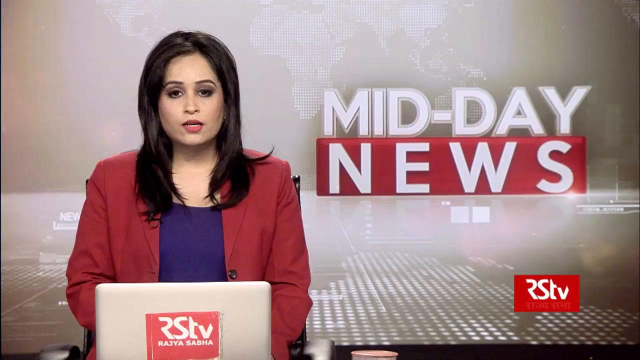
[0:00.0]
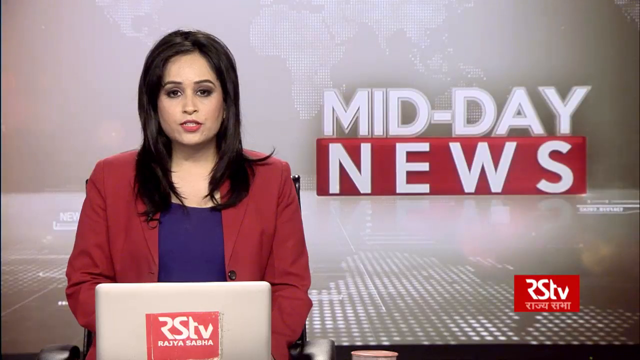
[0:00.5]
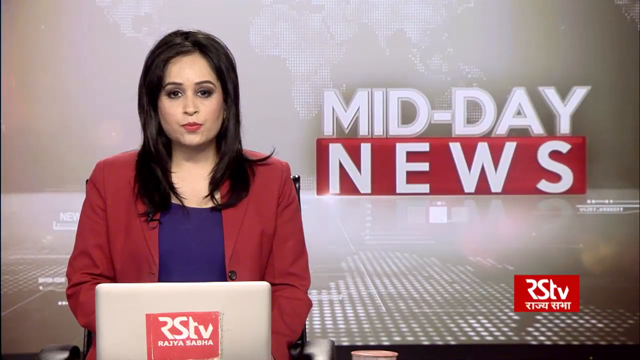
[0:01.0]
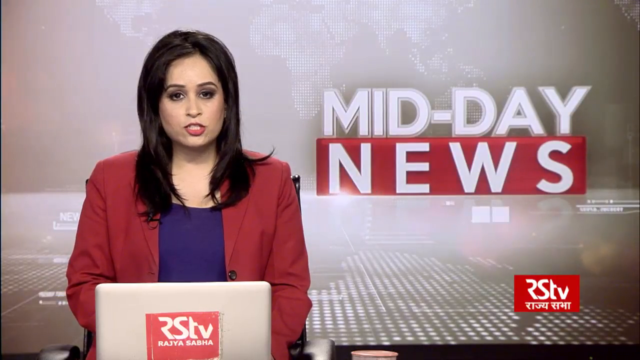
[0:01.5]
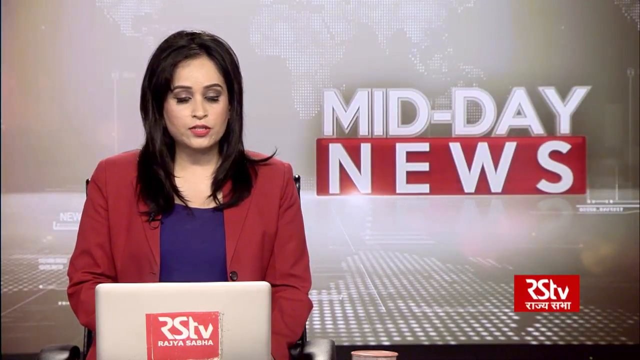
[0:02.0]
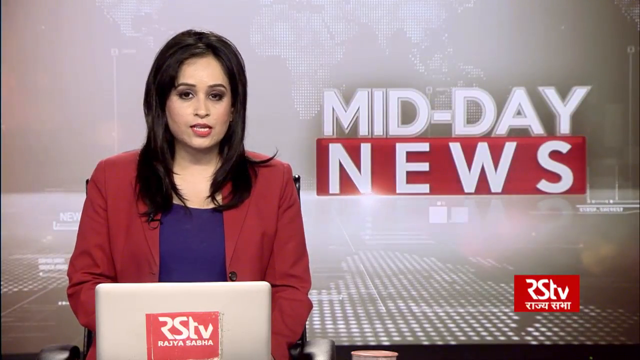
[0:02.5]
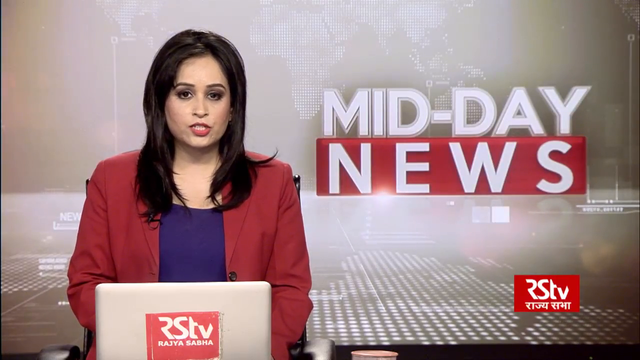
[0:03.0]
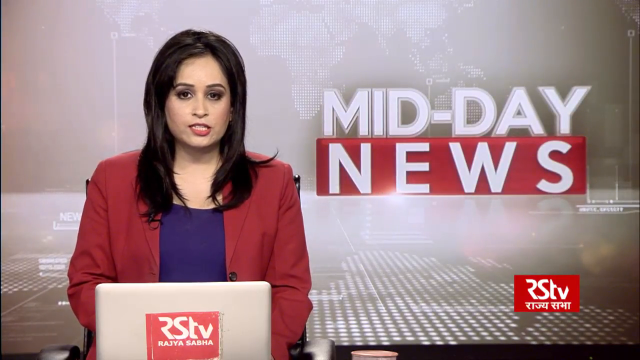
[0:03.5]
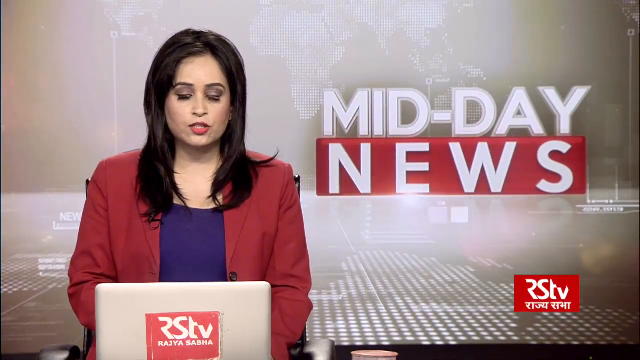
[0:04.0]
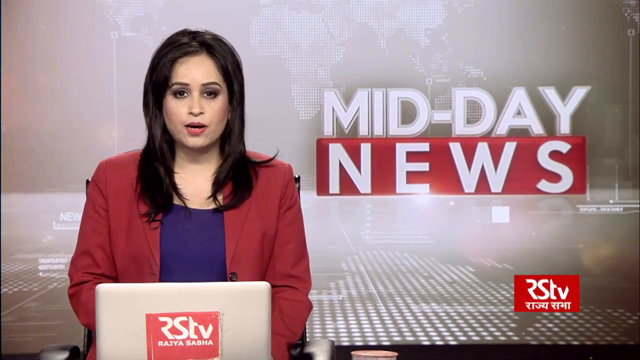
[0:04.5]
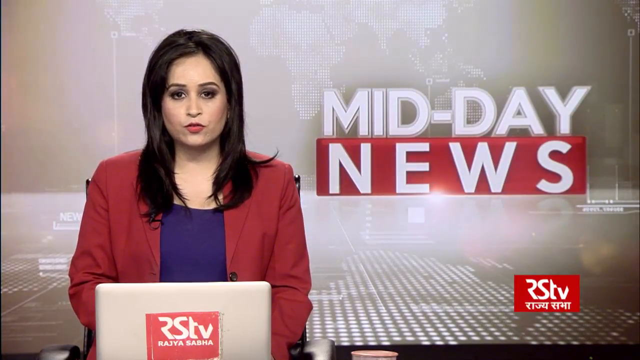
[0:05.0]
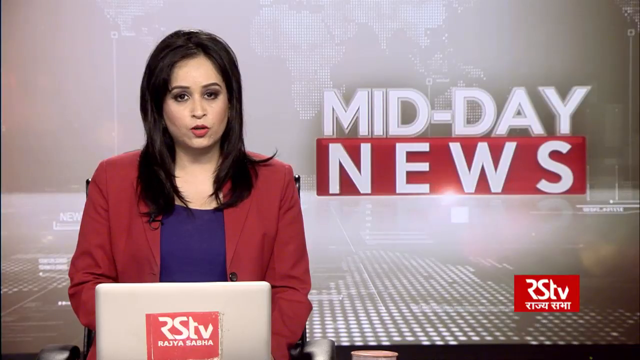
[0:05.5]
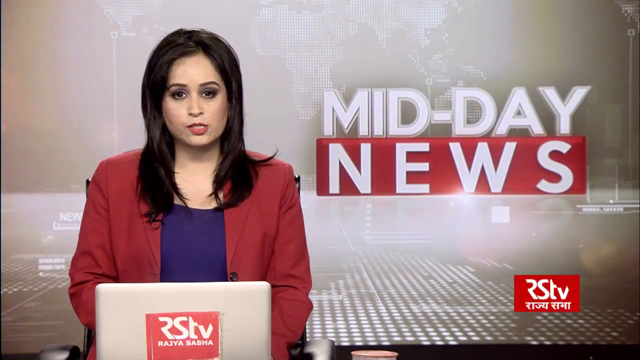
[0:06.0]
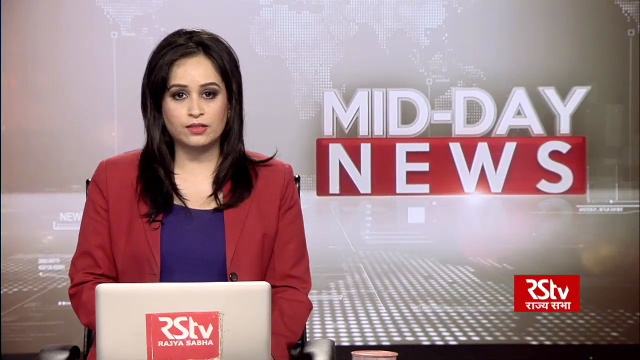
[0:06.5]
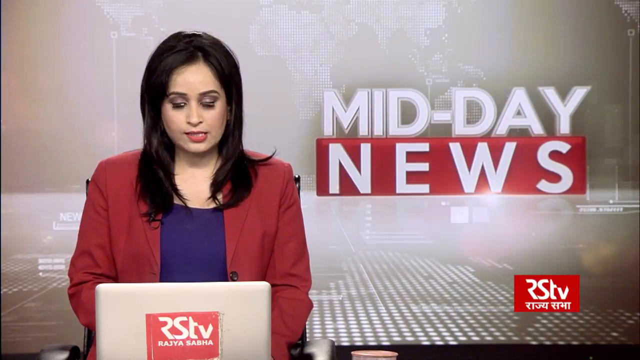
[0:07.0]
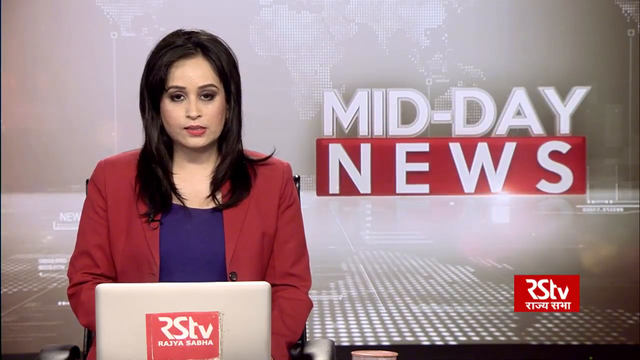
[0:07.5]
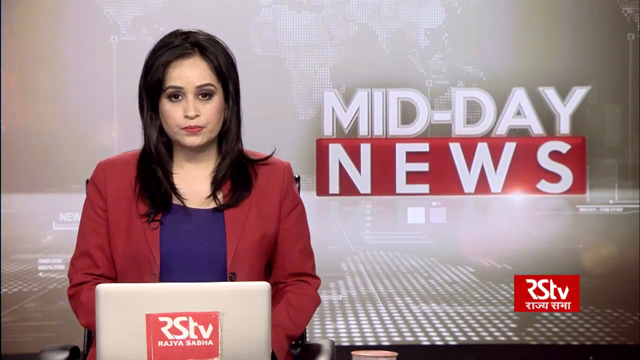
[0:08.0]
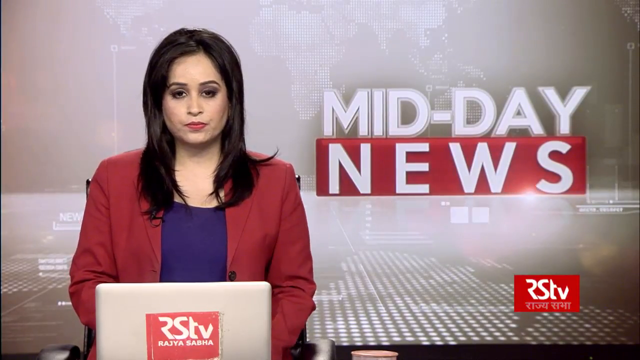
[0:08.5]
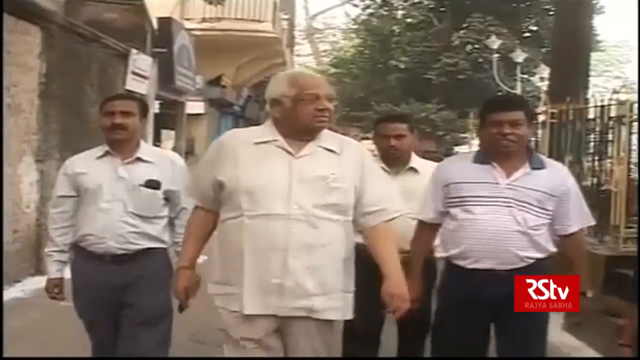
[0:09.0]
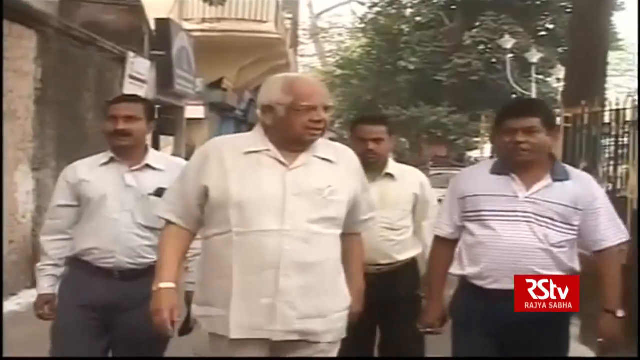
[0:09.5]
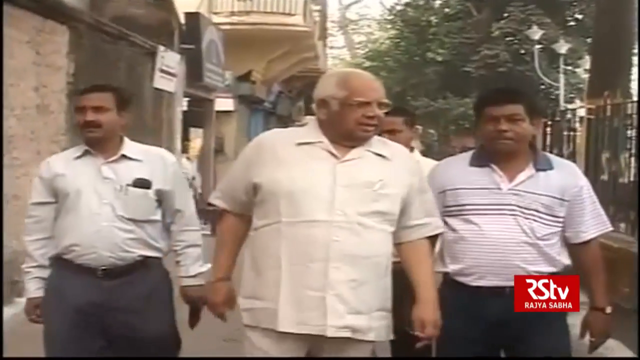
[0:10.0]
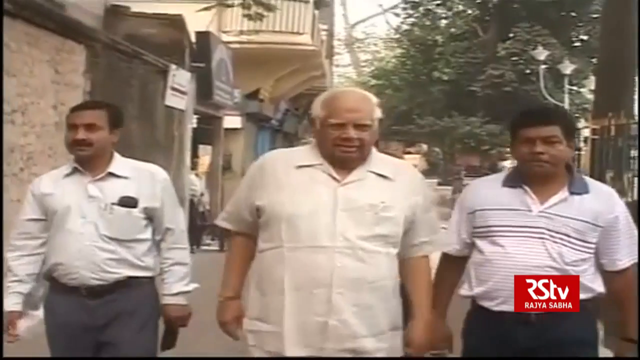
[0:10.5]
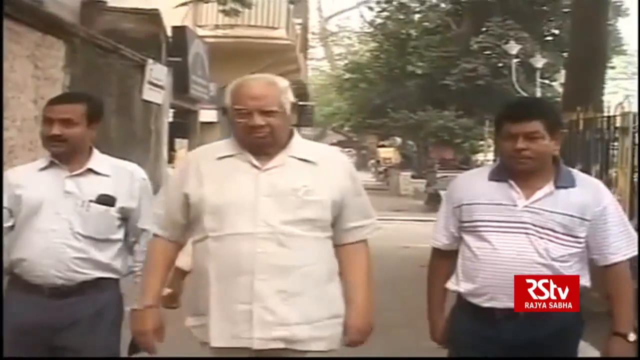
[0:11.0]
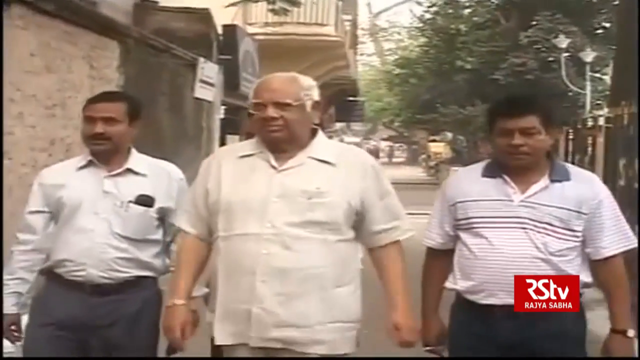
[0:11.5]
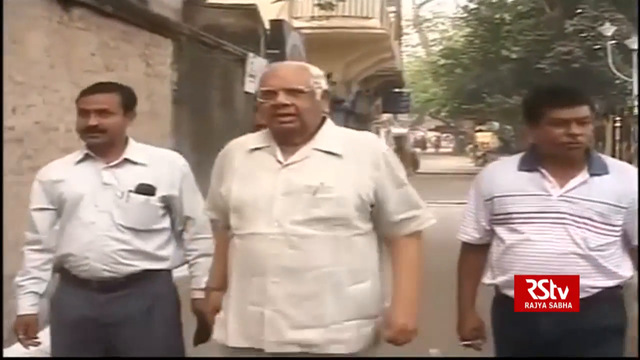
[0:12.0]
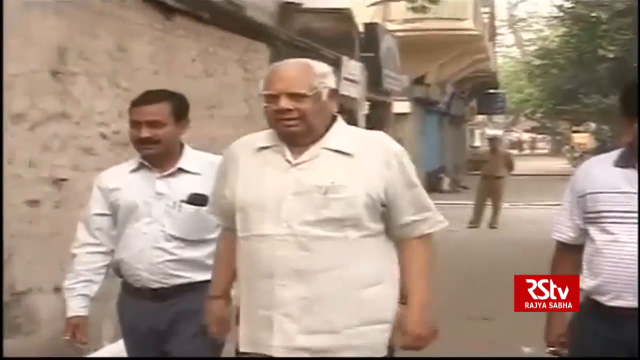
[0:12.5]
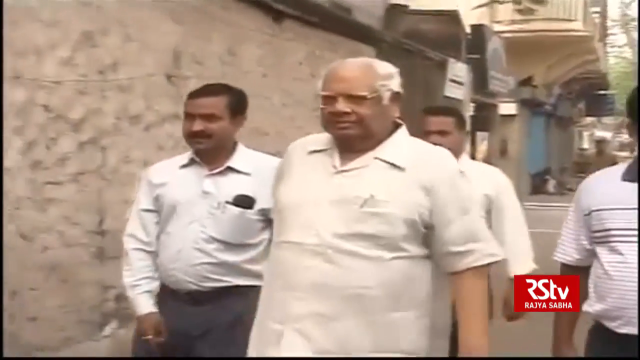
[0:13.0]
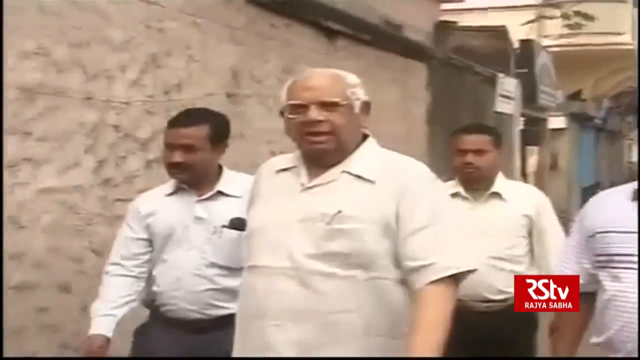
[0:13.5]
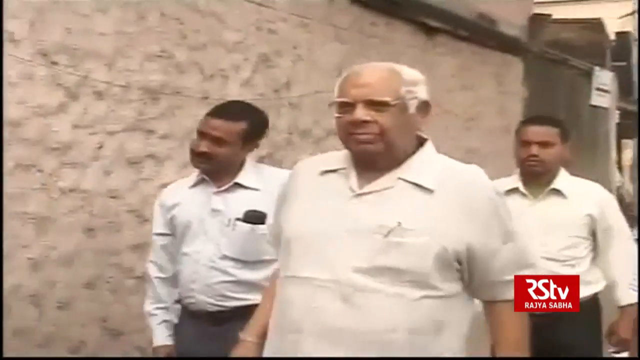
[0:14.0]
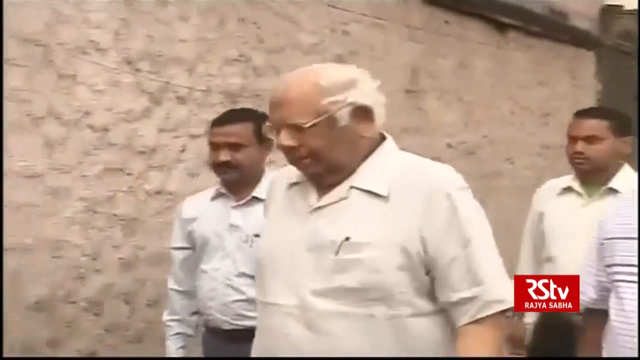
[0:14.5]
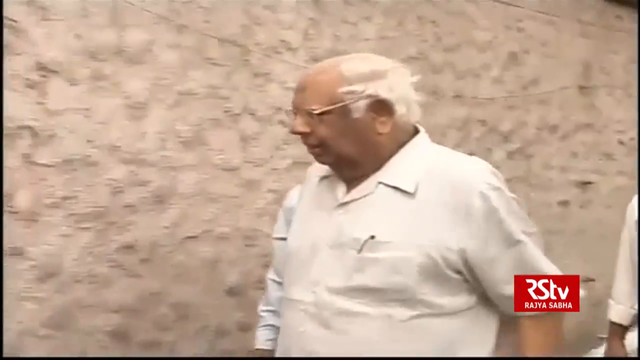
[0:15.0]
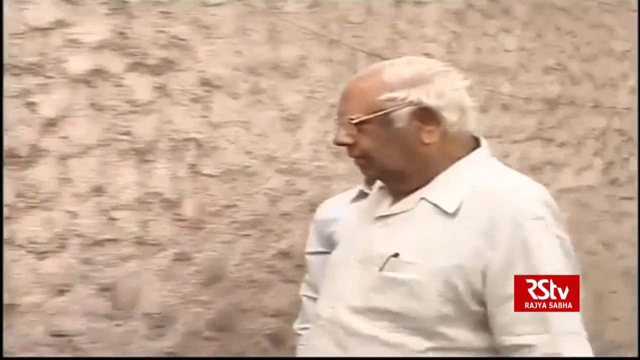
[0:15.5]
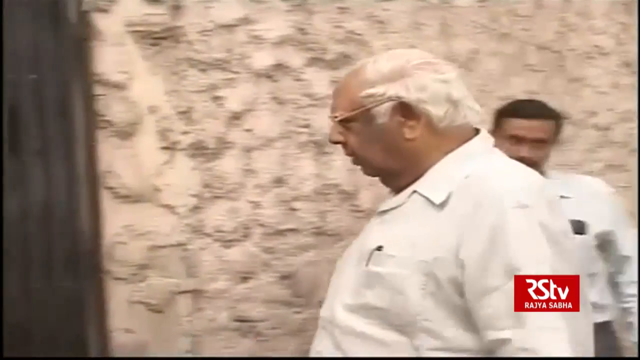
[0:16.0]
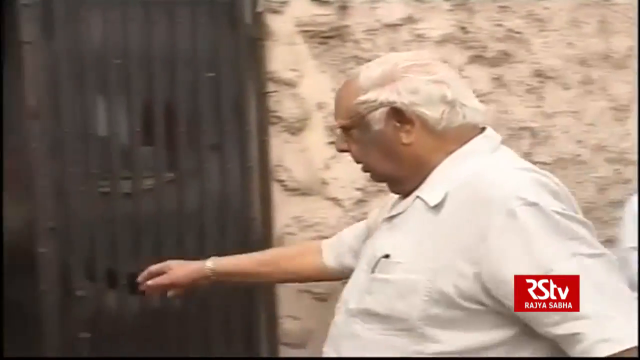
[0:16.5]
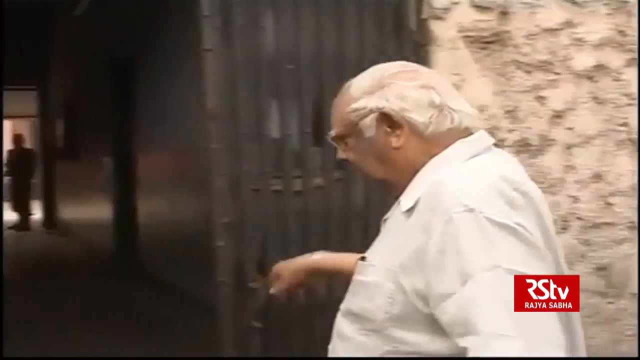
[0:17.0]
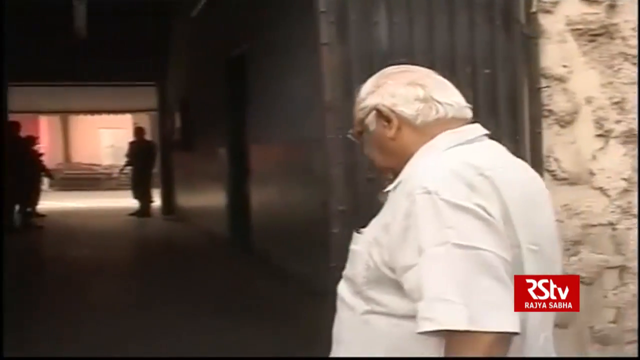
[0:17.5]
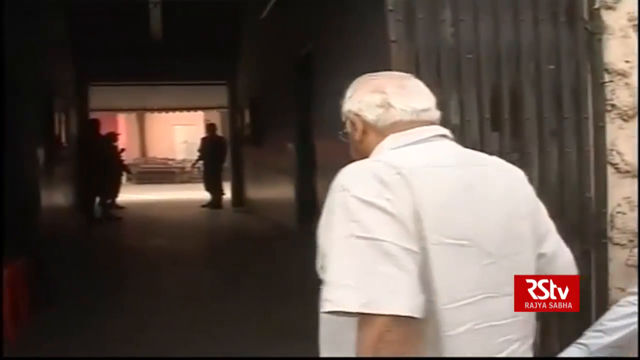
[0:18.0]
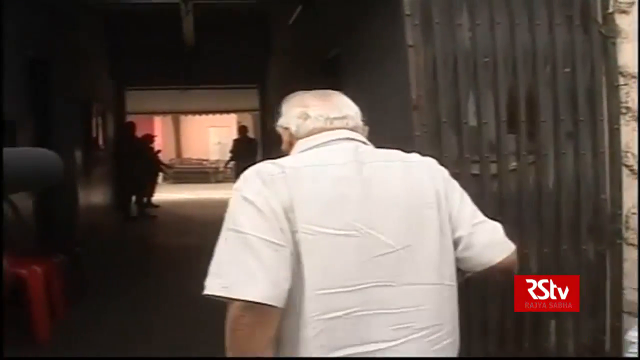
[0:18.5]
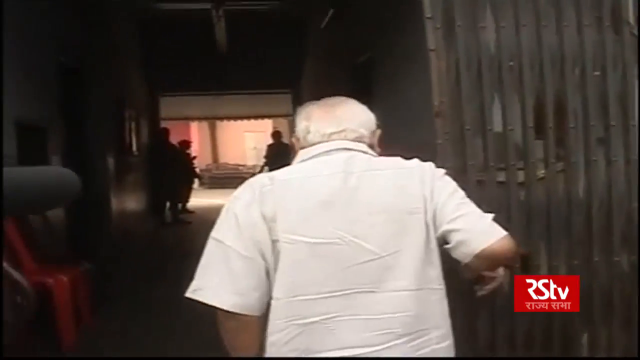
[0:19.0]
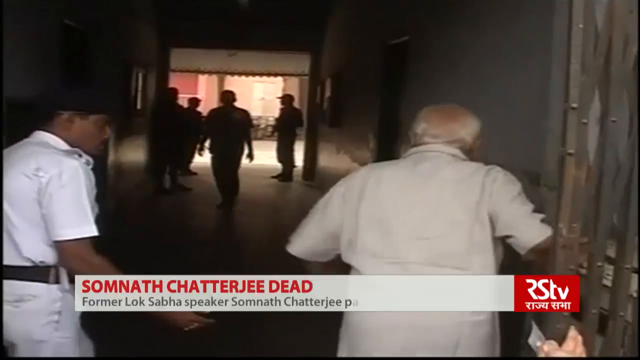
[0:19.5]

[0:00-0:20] A news anchor sits at a table with a laptop in front of her. She wears a red jacket with a purple shirt underneath and has long brown hair on the right side behind her. The screen says "midday news," and she talks directly to the camera. In the bottom right corner it says "RSTV." The background of the news channel is grey. The video then cuts to footage of an older man in a white shirt, with glasses and white hair, walking on a street corner. Three people wearing white clothes as well surround him; they have dark hair, and the person on the left has a dark mustache. The man walks to a door and goes through it very slowly and gingerly. There appear to be many reporters surrounding him, recording him as he does this.